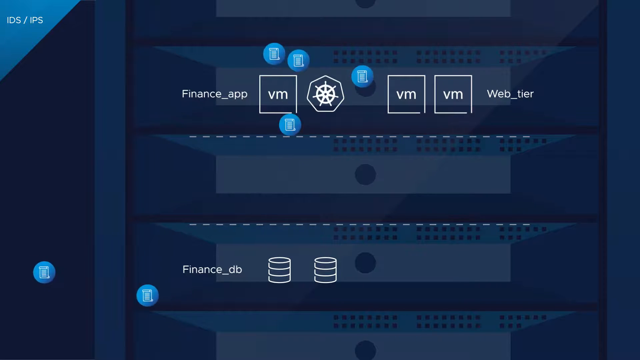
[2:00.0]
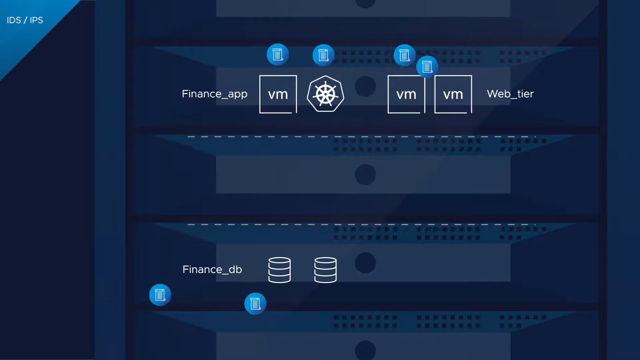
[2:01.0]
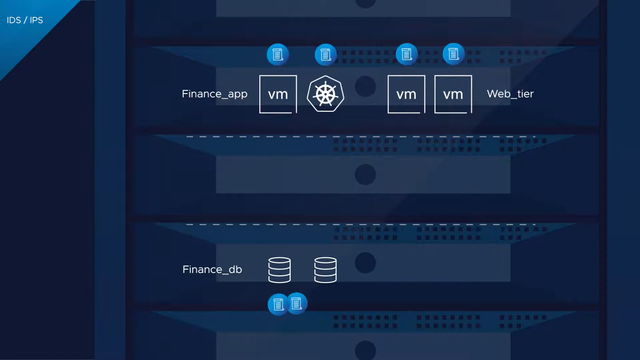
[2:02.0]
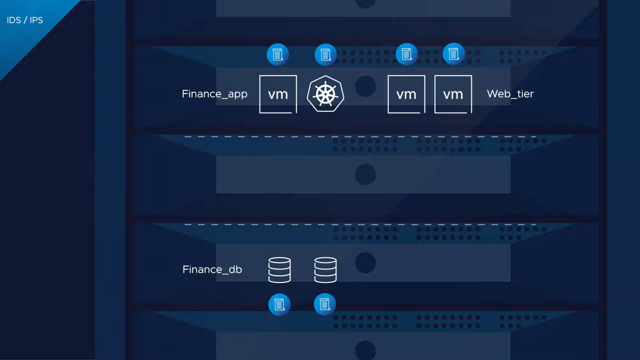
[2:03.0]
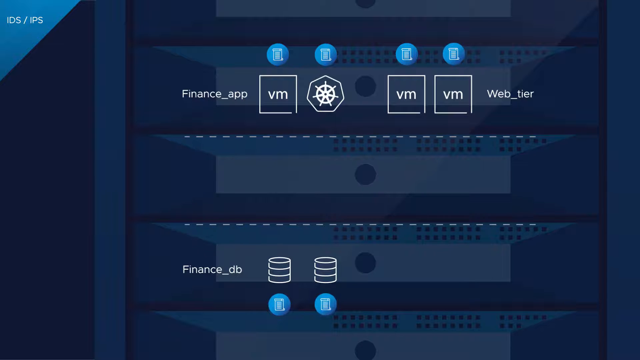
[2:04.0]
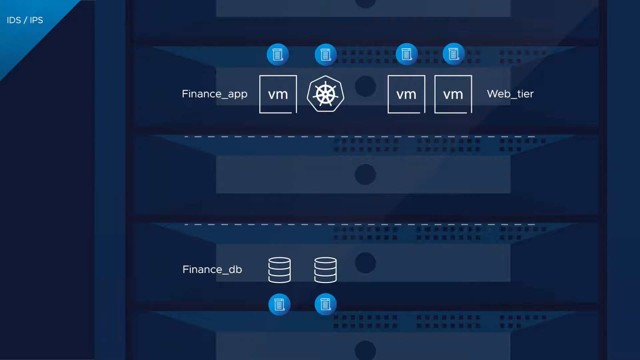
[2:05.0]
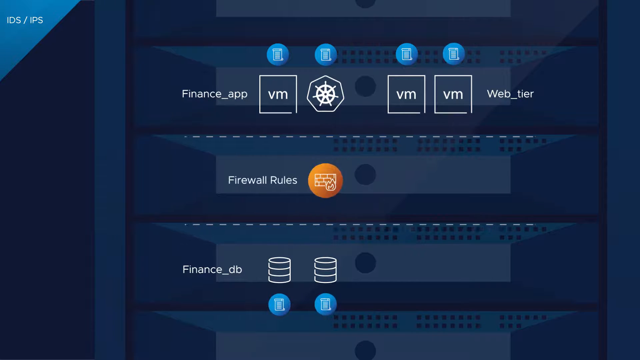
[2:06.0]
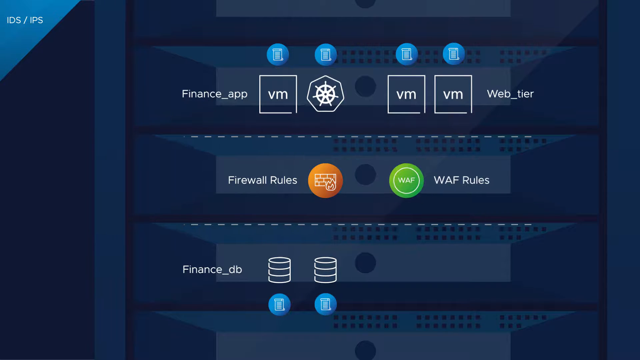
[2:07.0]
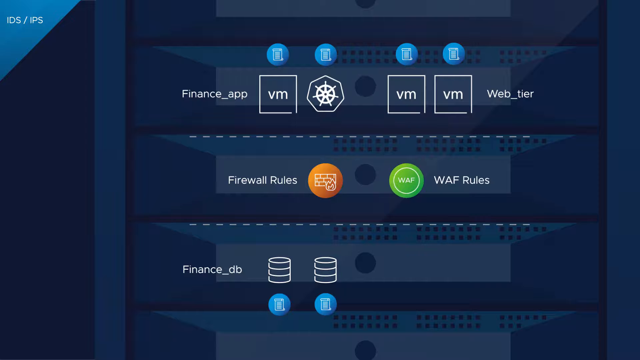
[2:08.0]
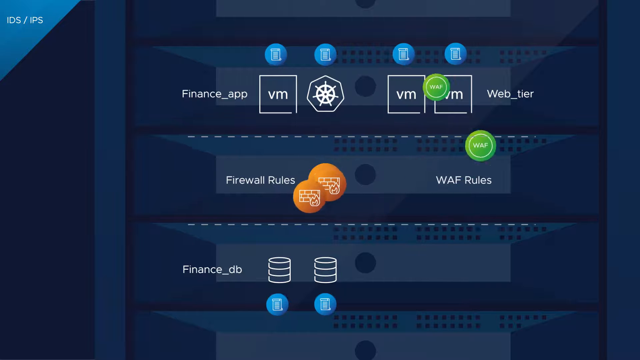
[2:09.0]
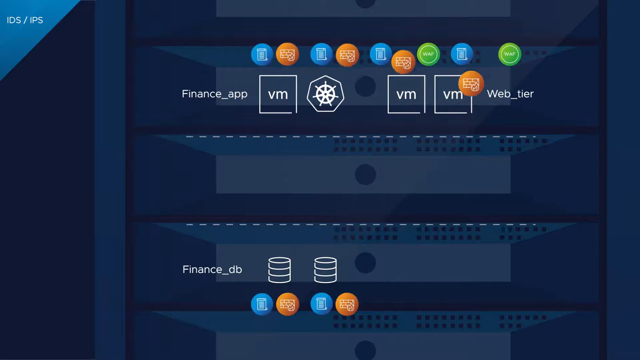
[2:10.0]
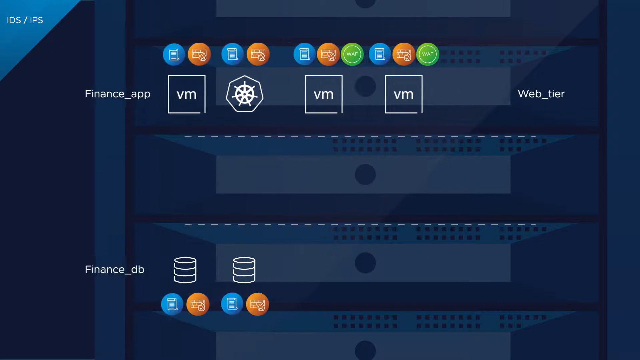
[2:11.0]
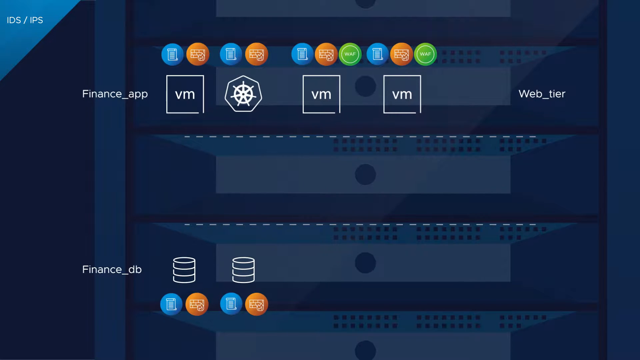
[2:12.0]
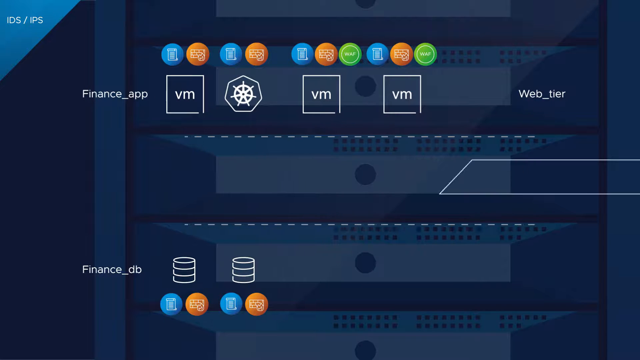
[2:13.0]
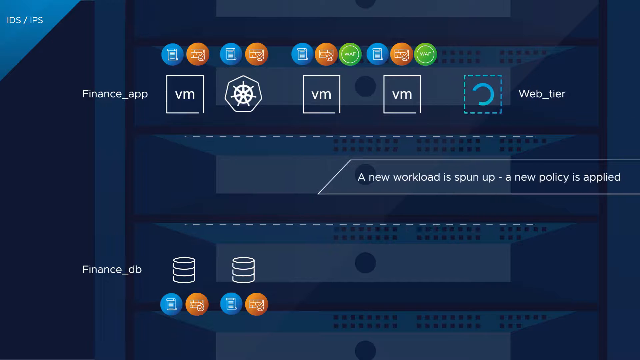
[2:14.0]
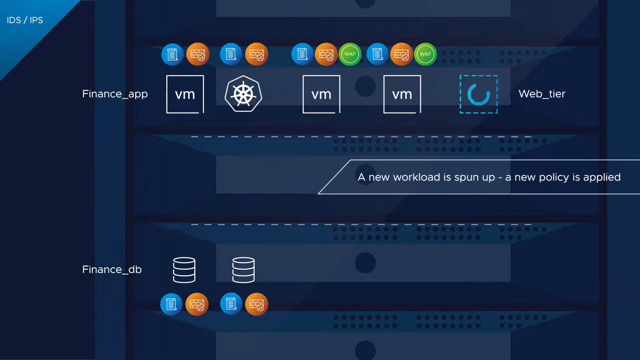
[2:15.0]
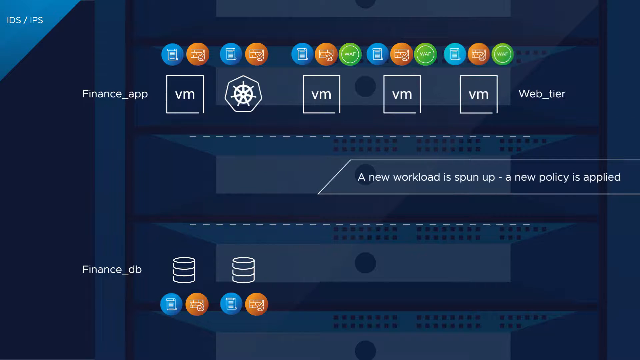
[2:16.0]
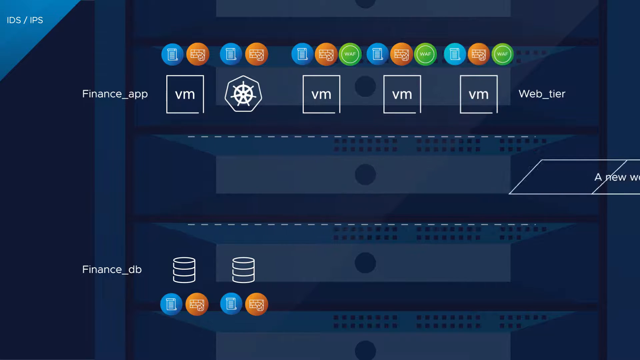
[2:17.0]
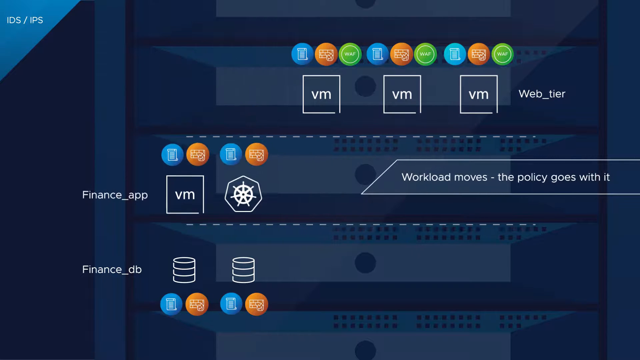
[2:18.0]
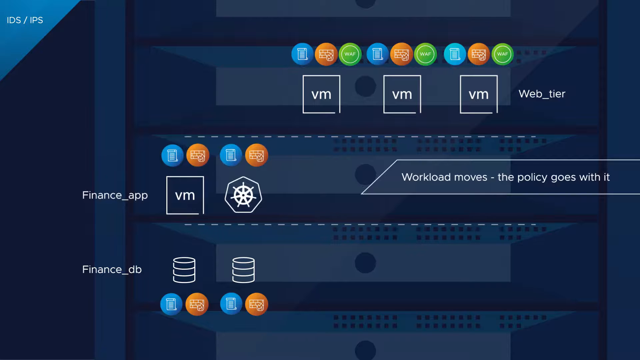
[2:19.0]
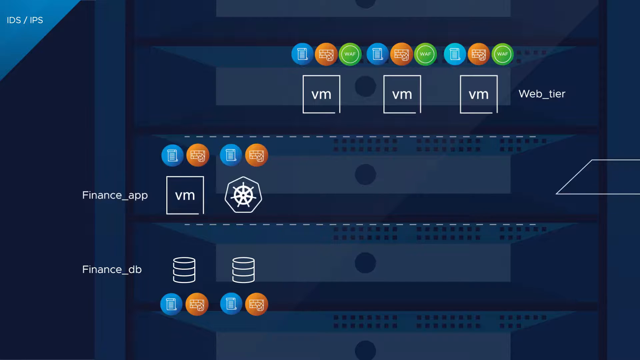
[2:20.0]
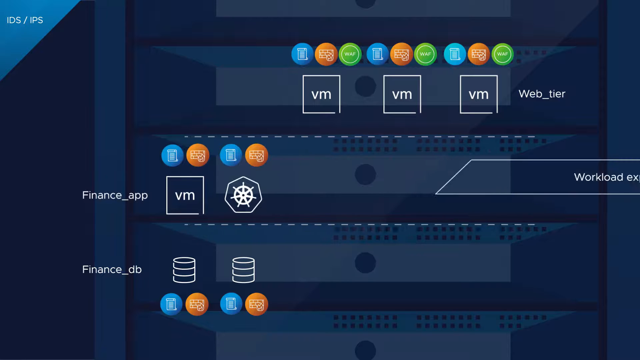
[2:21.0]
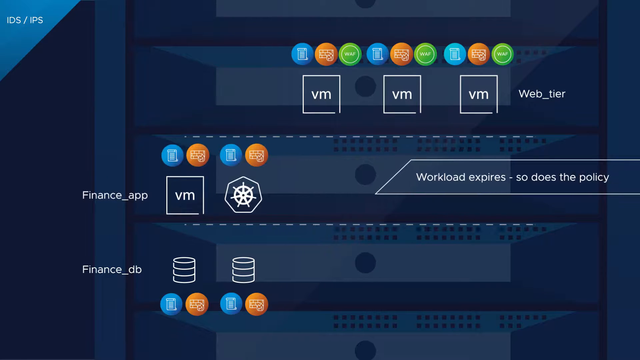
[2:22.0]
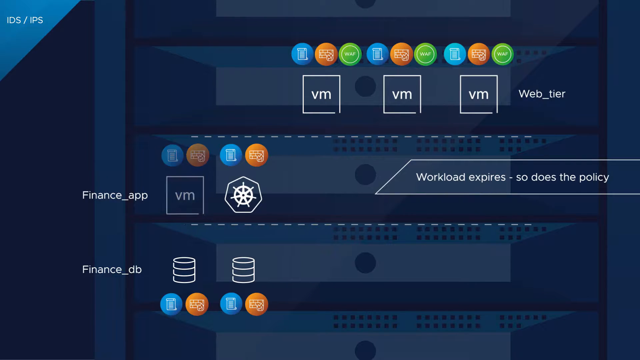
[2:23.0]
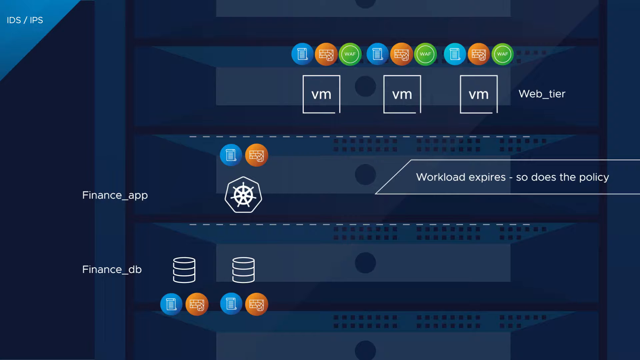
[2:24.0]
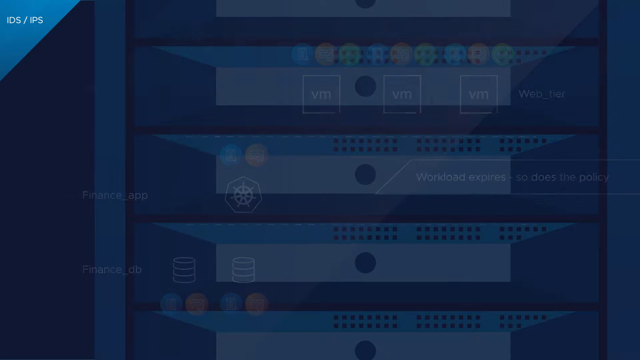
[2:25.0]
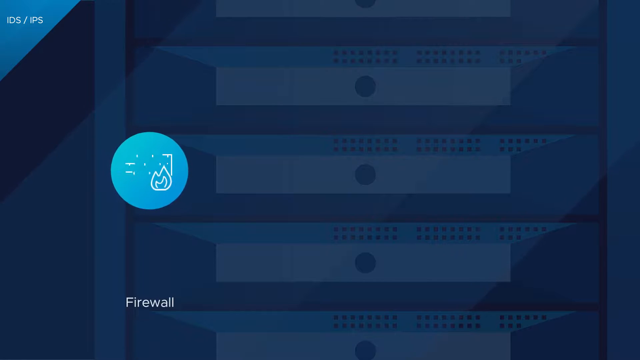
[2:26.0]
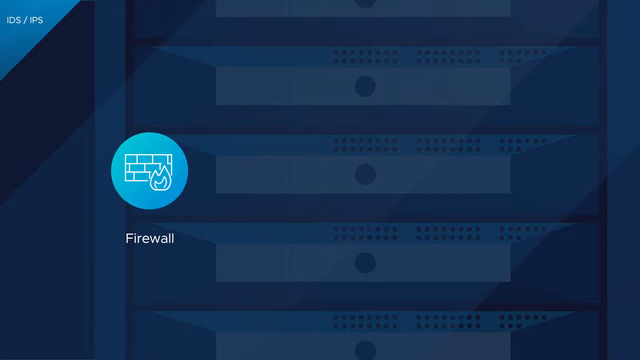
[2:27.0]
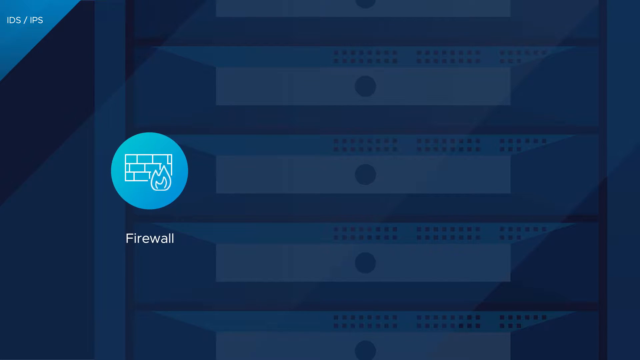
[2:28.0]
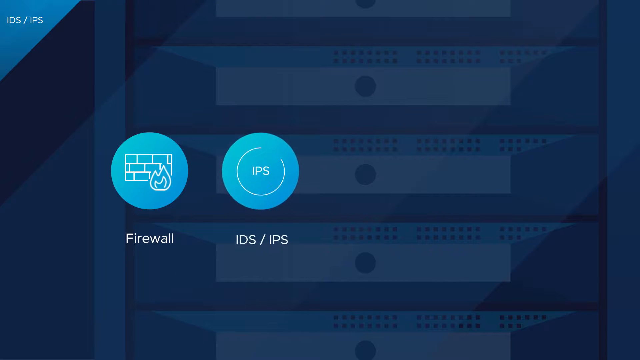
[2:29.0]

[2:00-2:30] The finance app and finance DP labels pop up, and "Firewall Rules" appears in the center with the firewall logo of a brick wall with fire in front of it. A green one then pops up reading "WAF" in capital letters, with "Rules" in a green circle. These connect out to the finance items, and the WAF connects to the VM elements with "Web Tier". Text on the right side reads "a new workload is spun up, a new policy is applied", then disappears and is replaced by "workload moves, the policy goes with it" as the finance app moves from one server to another. More text on the right reads "workload expires, so does the policy", and the finance items disappear. A pop-up for the firewall appears, now in blue, and another pop-up starts to appear before its text can be seen.